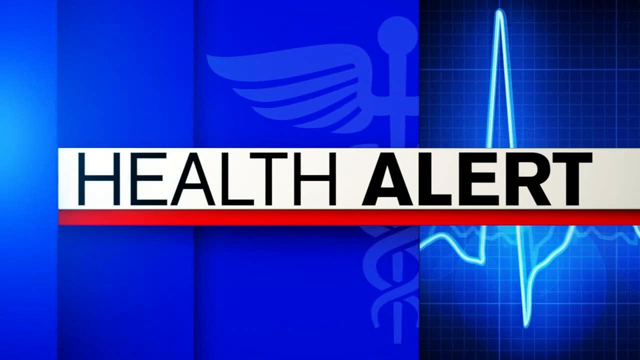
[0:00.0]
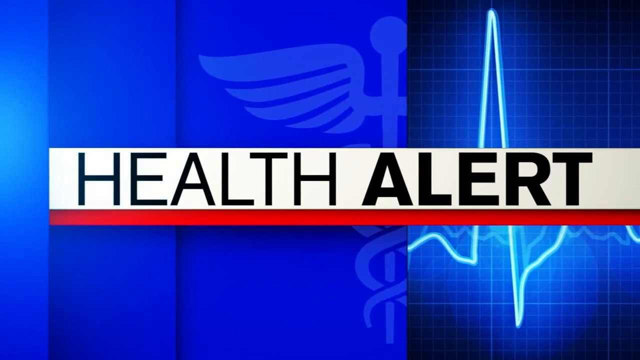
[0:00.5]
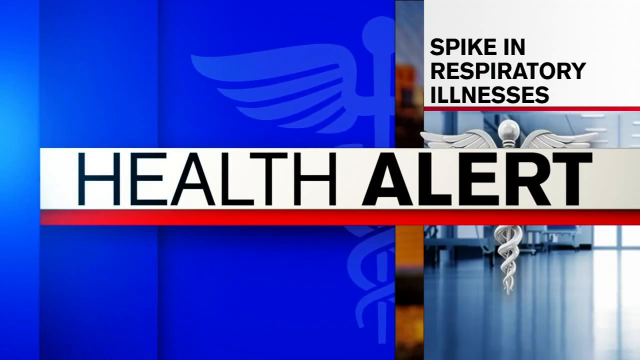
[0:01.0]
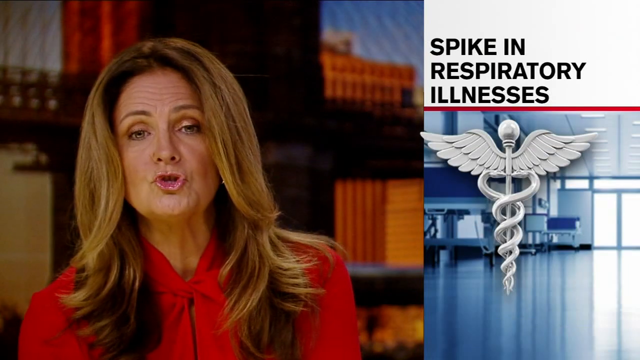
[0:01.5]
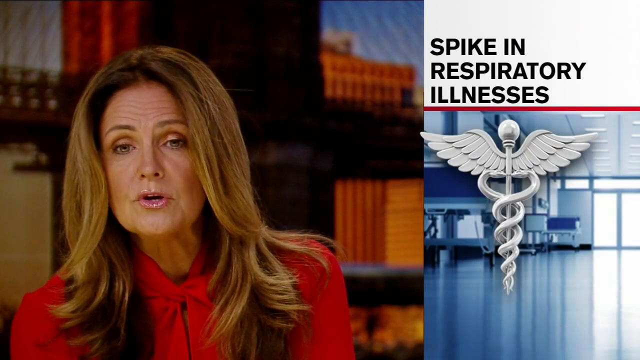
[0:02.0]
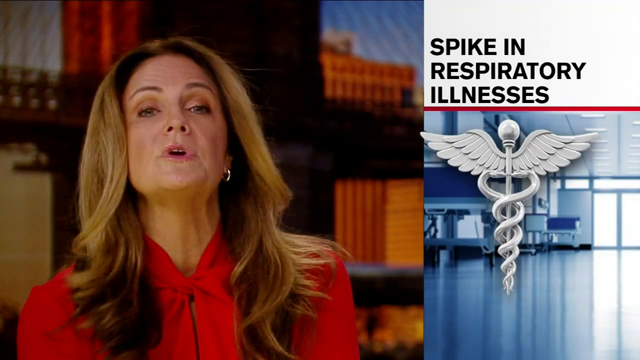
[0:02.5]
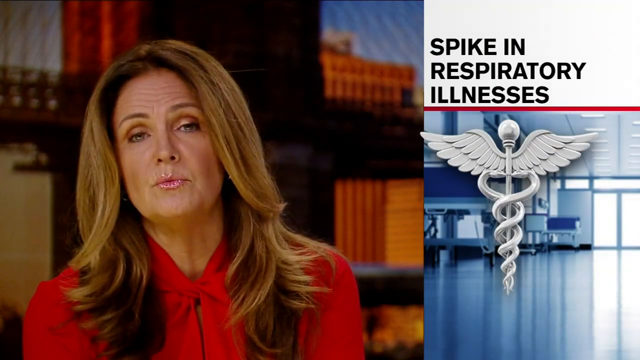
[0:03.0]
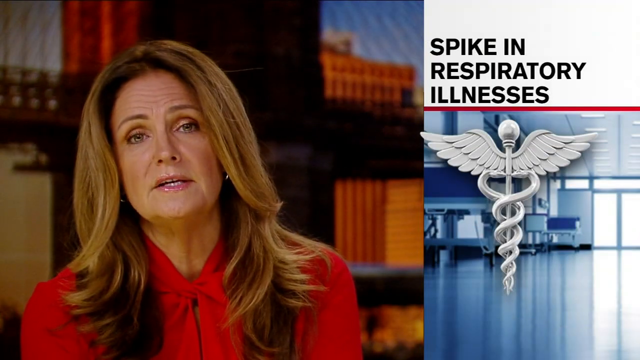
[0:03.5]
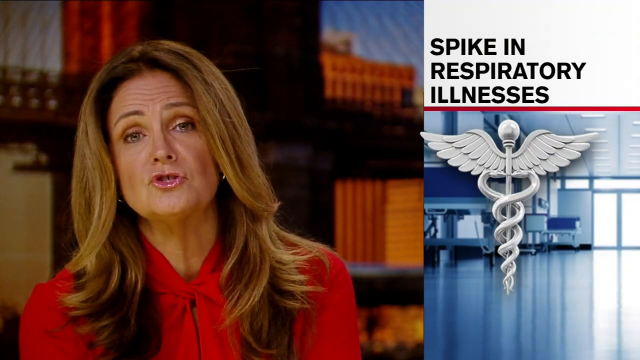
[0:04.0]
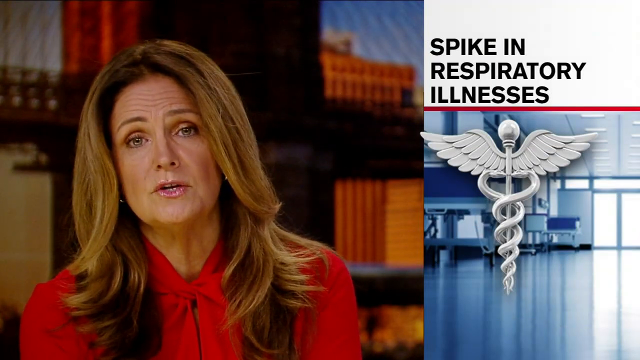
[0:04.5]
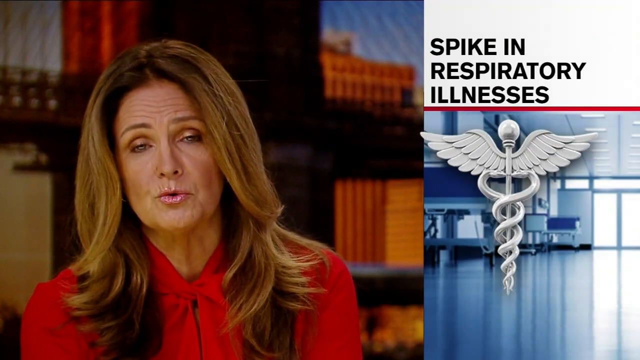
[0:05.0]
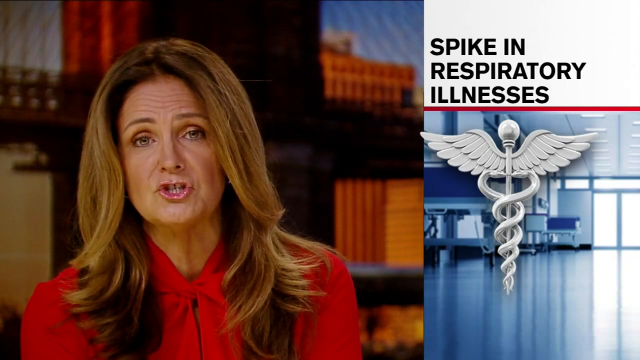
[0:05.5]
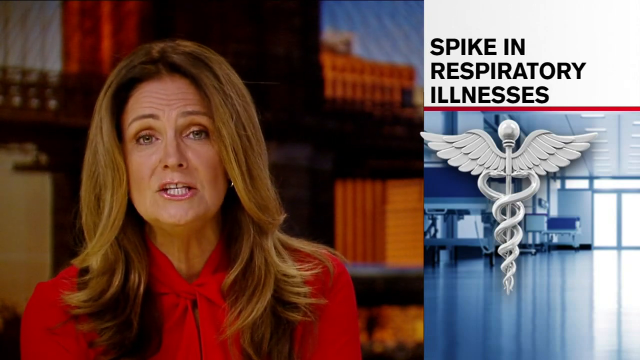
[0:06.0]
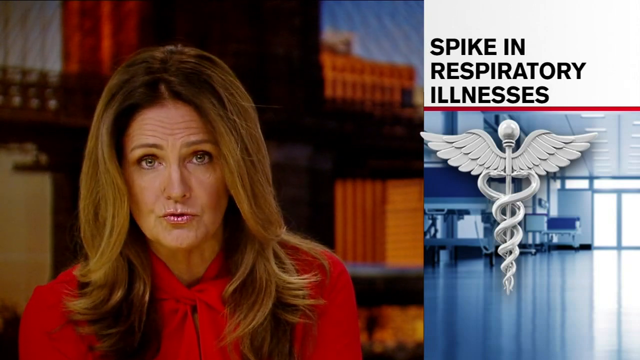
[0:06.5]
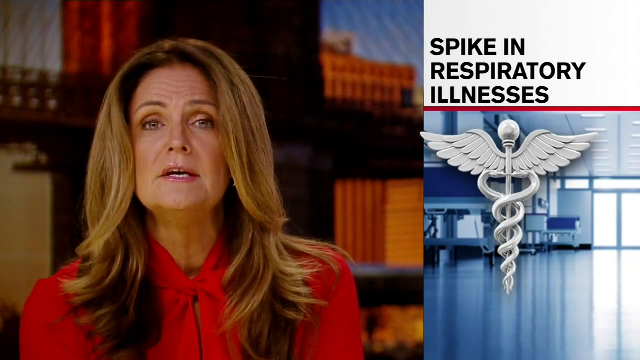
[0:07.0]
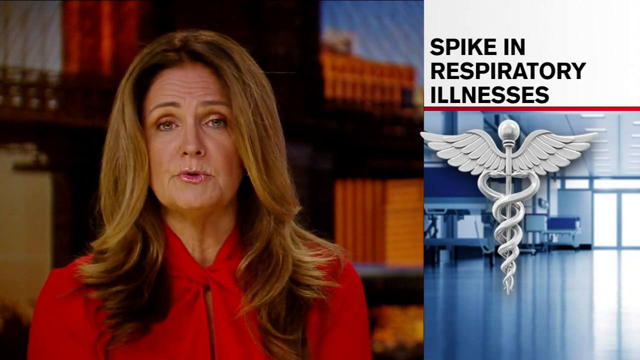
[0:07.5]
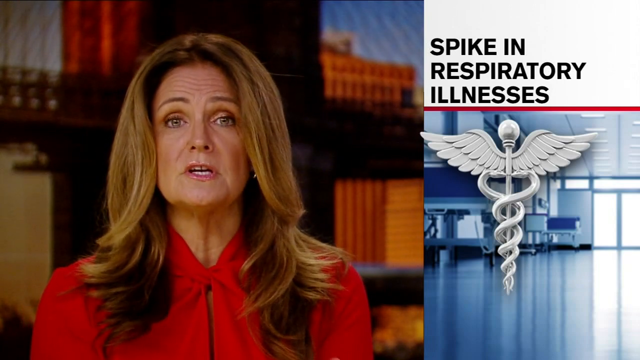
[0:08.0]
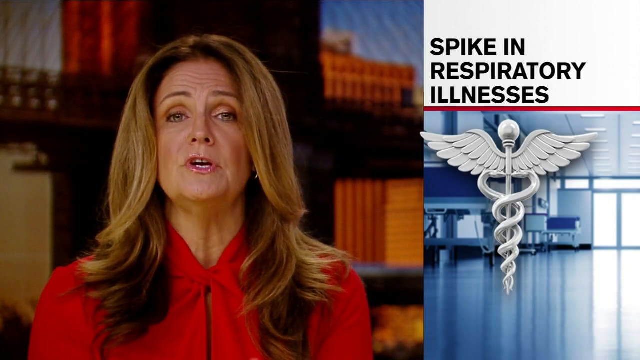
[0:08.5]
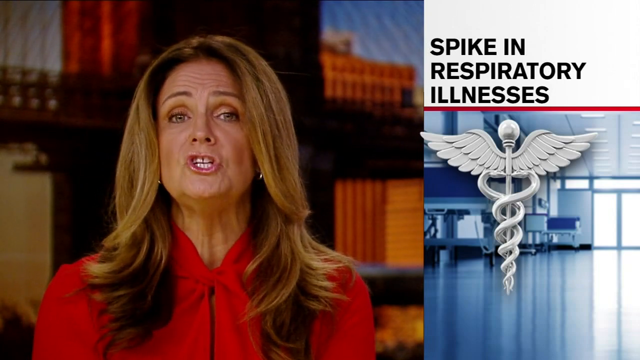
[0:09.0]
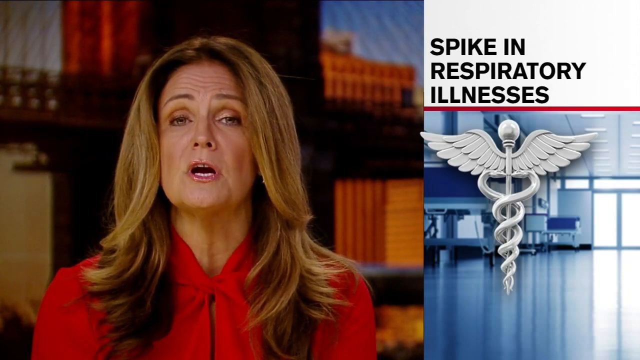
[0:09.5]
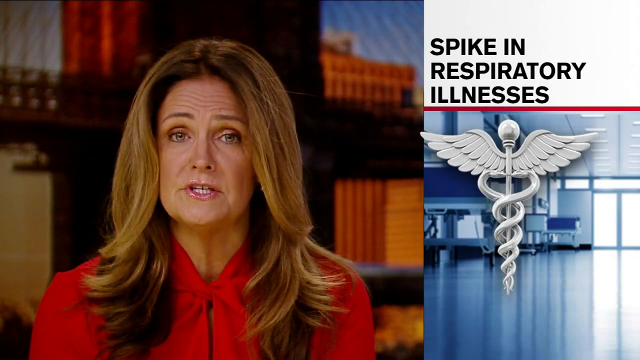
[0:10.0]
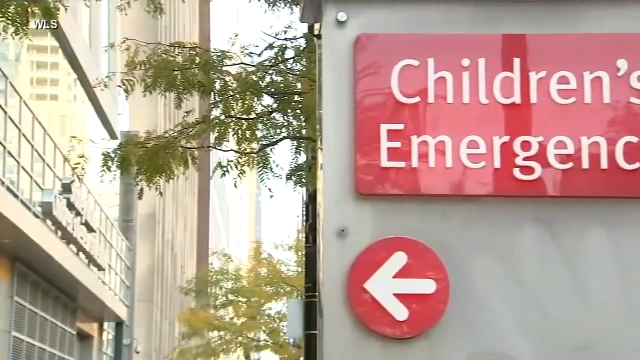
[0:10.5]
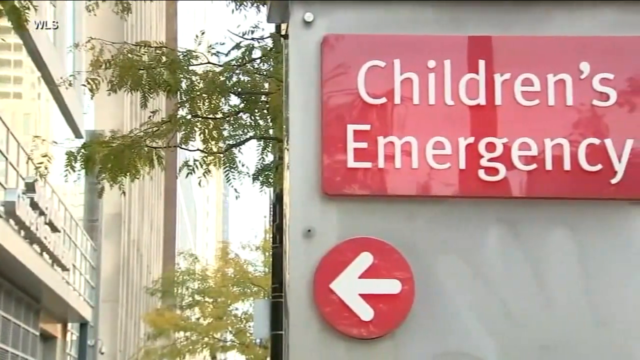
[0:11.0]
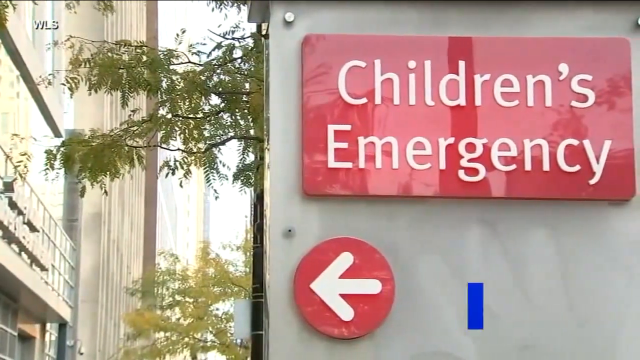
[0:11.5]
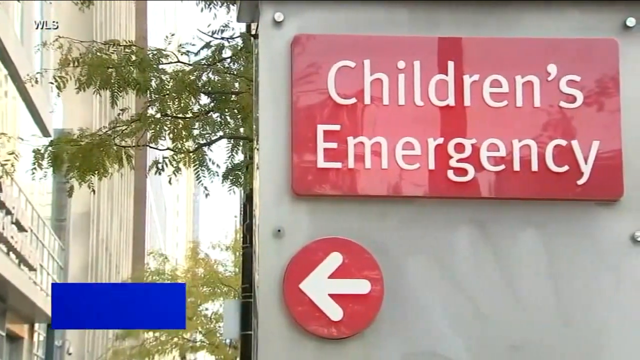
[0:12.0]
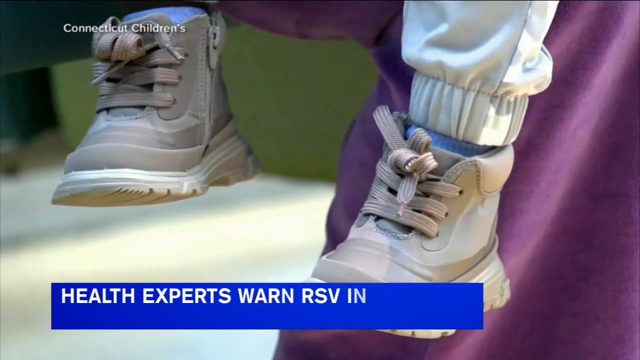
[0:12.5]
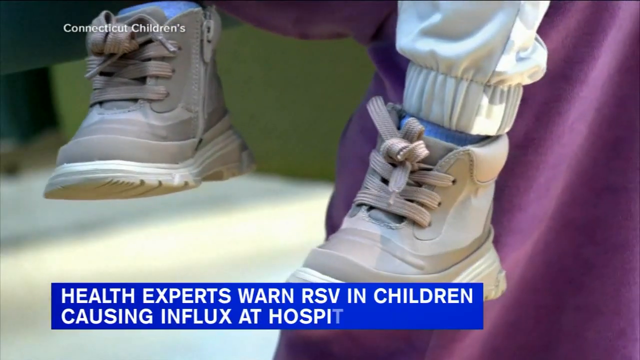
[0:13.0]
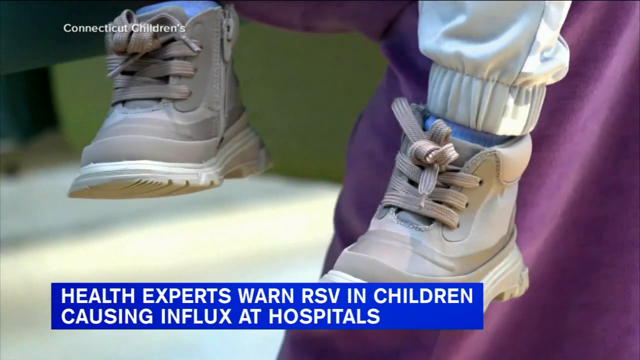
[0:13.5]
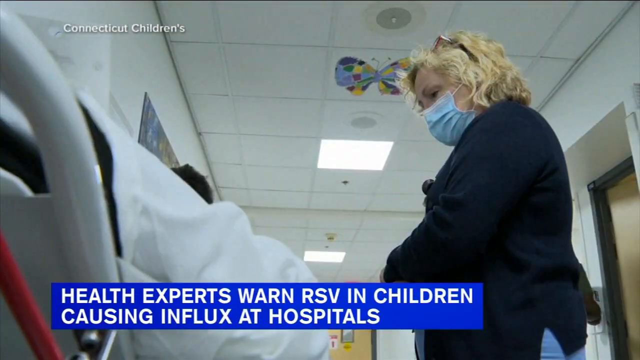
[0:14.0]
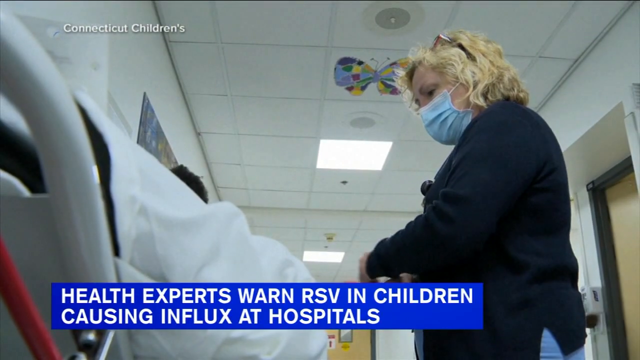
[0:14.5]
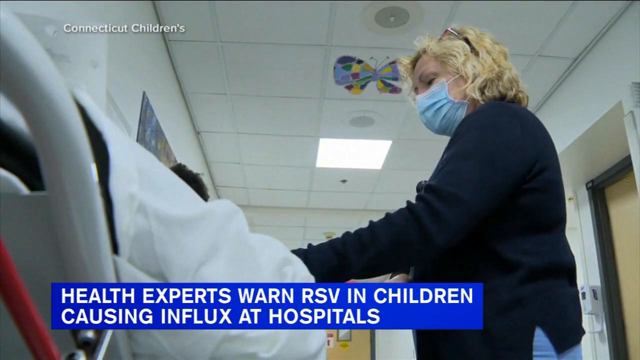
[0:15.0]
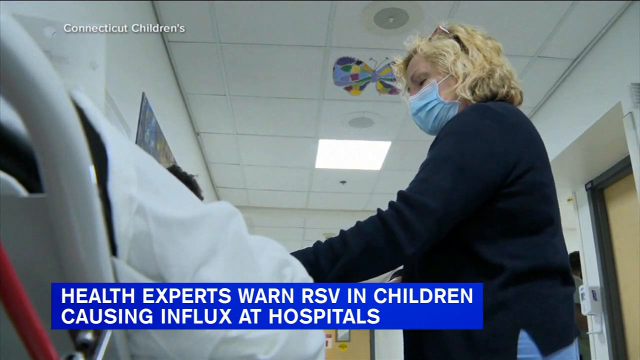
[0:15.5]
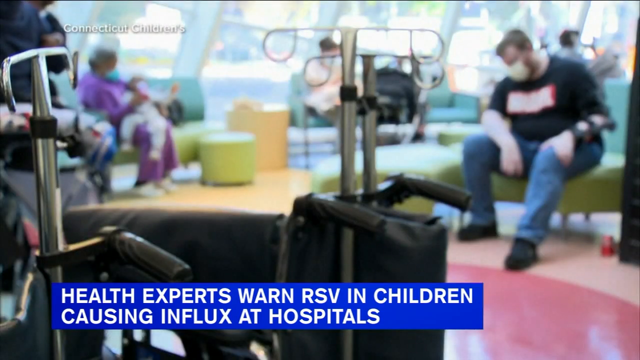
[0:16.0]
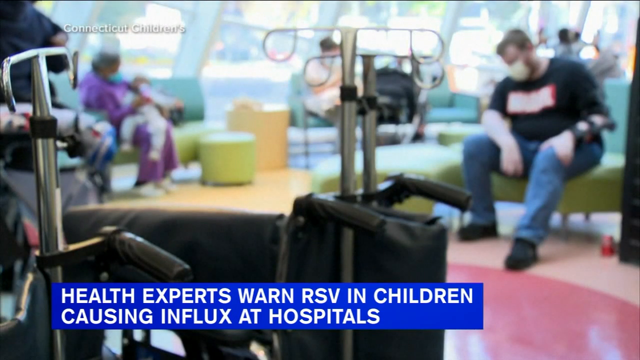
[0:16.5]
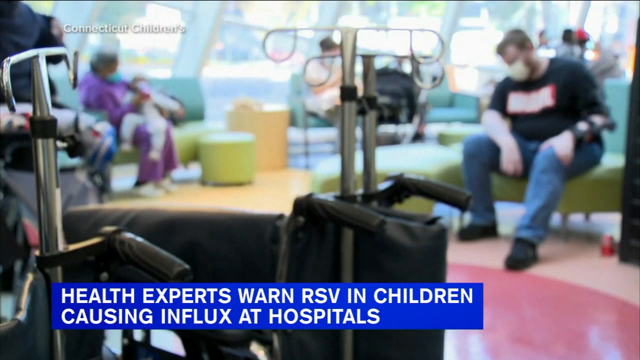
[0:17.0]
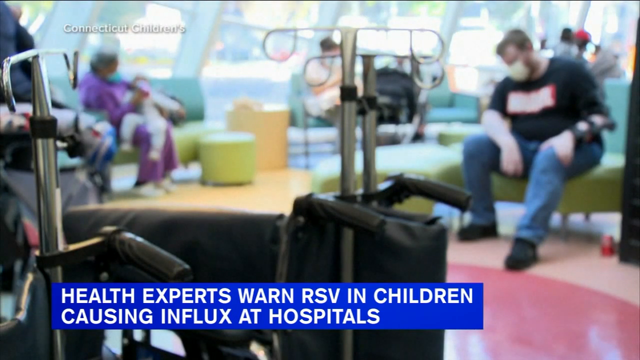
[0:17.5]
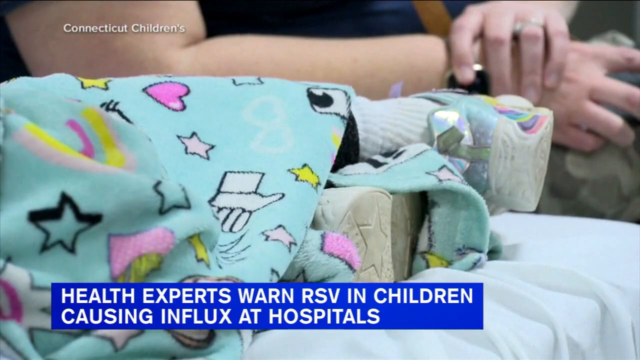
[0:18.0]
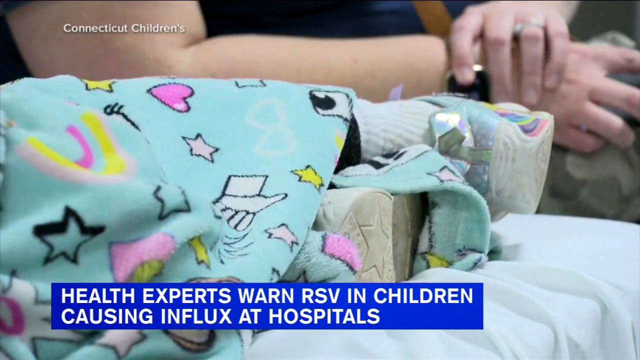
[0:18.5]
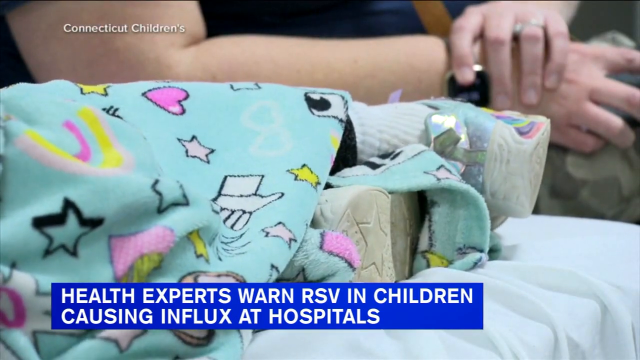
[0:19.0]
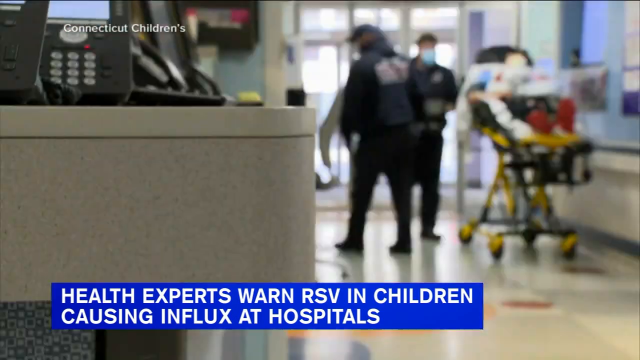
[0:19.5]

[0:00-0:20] A news program issues a health alert, presented by a female news anchor with long brown hair who wears a red top and looks to be in her 50s. To her right is a graphic that says "spike in respiratory illnesses." The report moves to footage of the outside of a children's emergency hospital. Next, the legs of a child sitting on a chair swing in the air, with a close-up of the gray tennis shoes the child wears; the child seems to be wearing white pants. In another shot, a nurse, an older blonde woman in a blue medical mask and a long-sleeve dark blue sweater, stands by a patient's bed in the hospital. The scene shifts to what appears to be a hospital waiting room, where different people sit on teal-colored chairs in the background. Another scene shows the entrance of a hospital, where a person in dark black scrubs escorts a gurney.